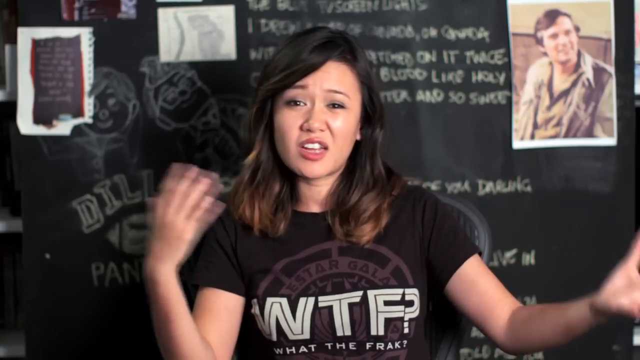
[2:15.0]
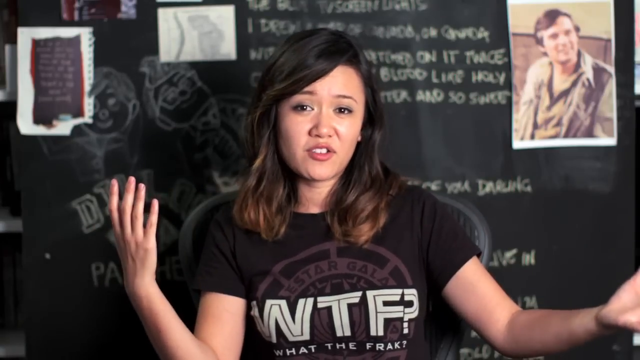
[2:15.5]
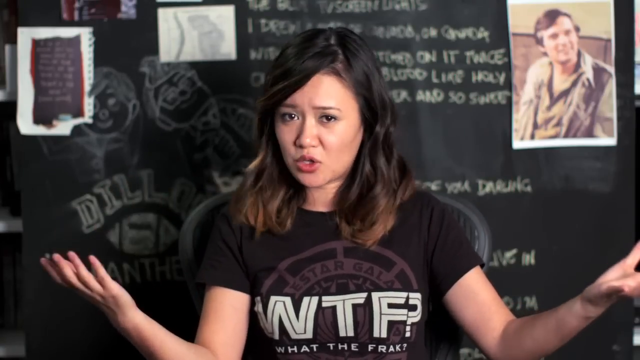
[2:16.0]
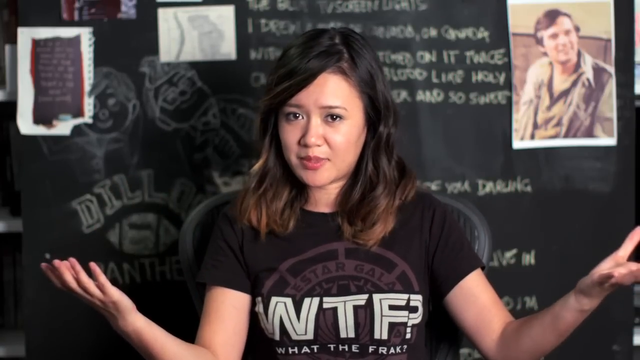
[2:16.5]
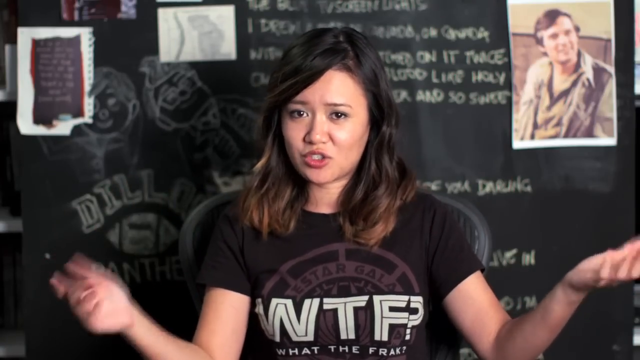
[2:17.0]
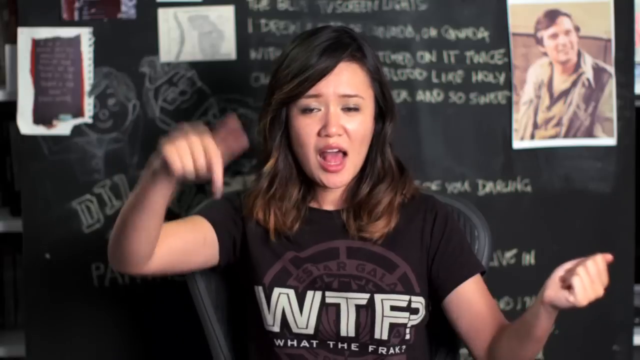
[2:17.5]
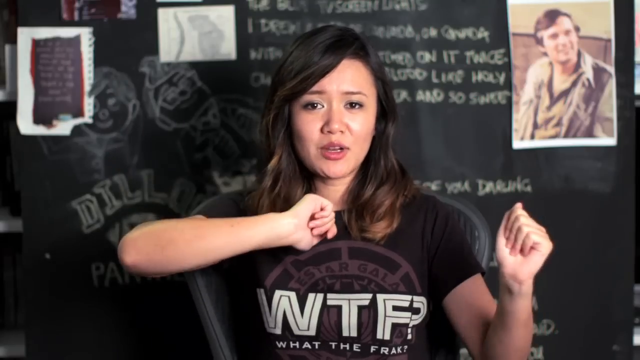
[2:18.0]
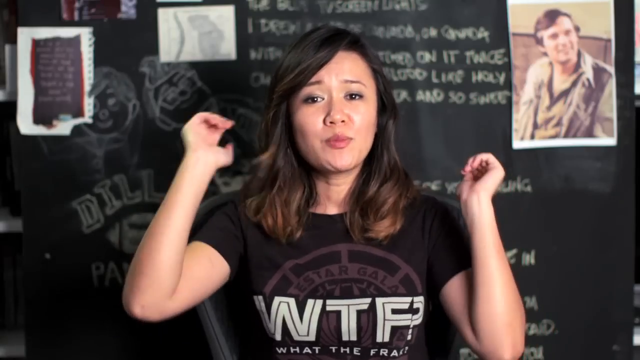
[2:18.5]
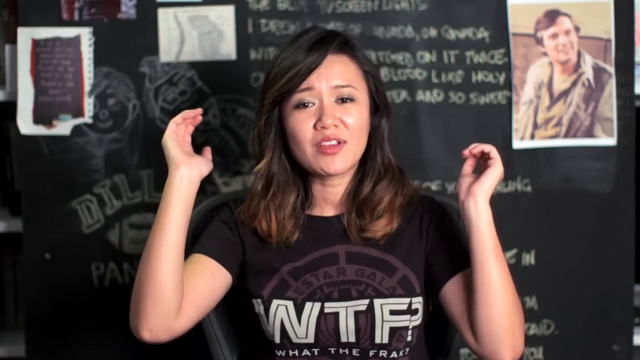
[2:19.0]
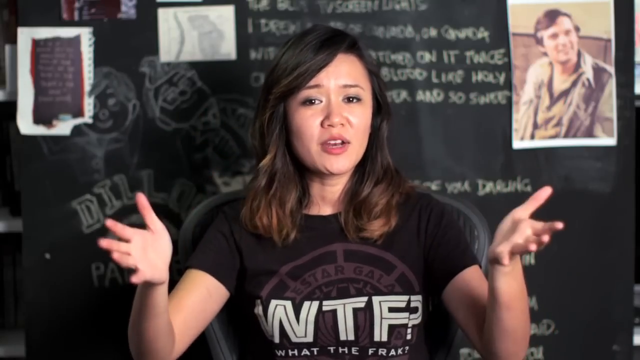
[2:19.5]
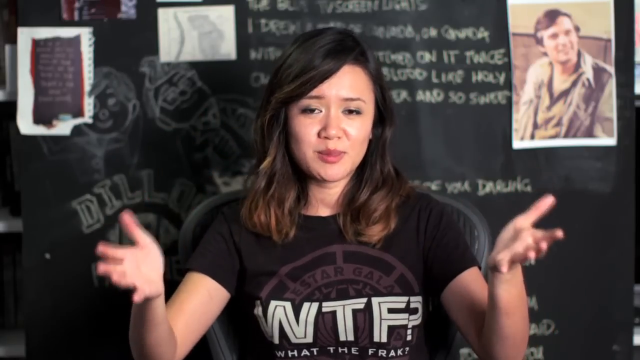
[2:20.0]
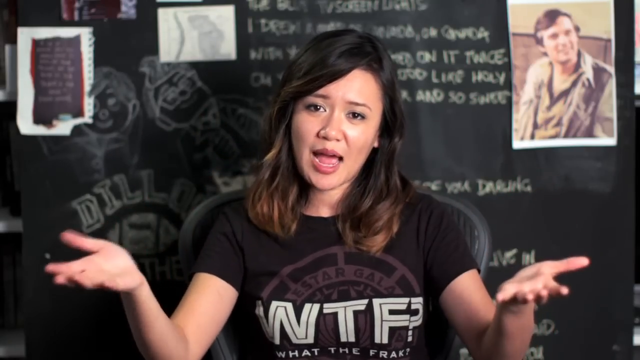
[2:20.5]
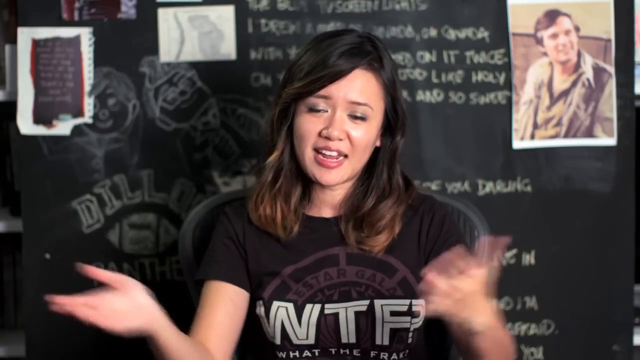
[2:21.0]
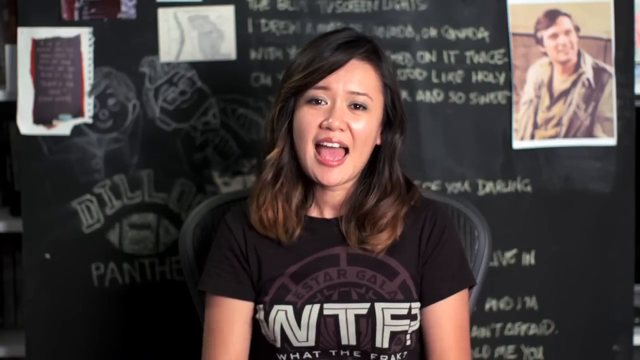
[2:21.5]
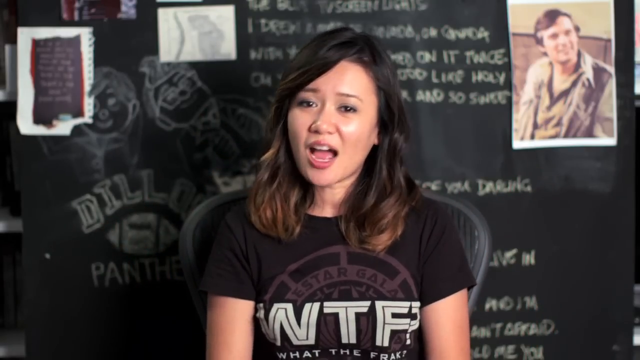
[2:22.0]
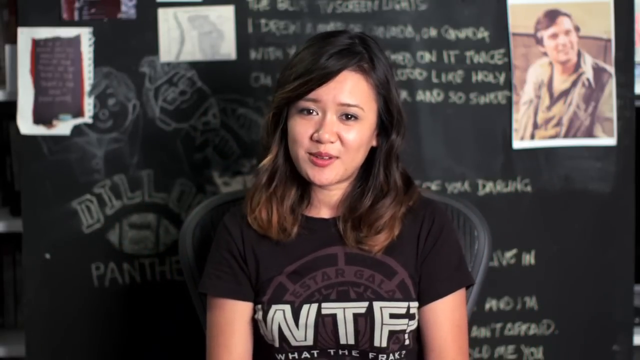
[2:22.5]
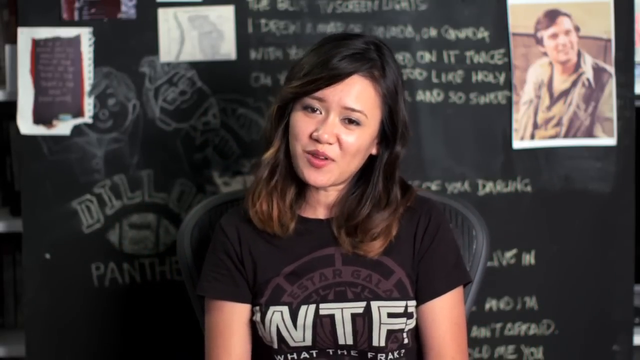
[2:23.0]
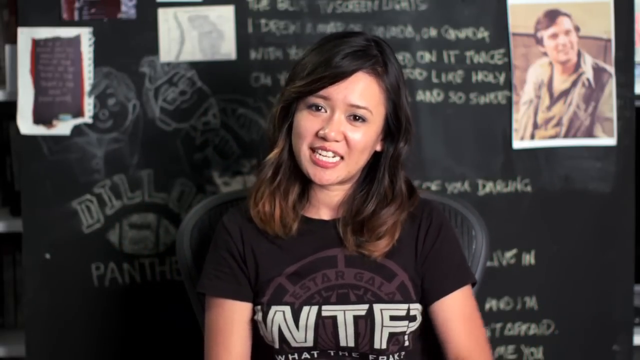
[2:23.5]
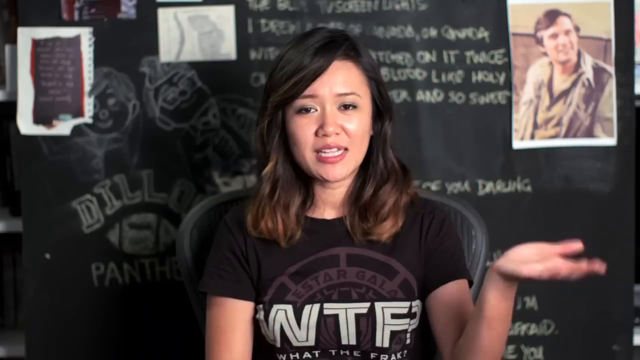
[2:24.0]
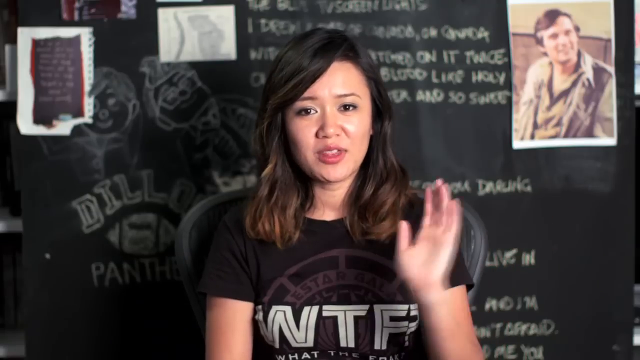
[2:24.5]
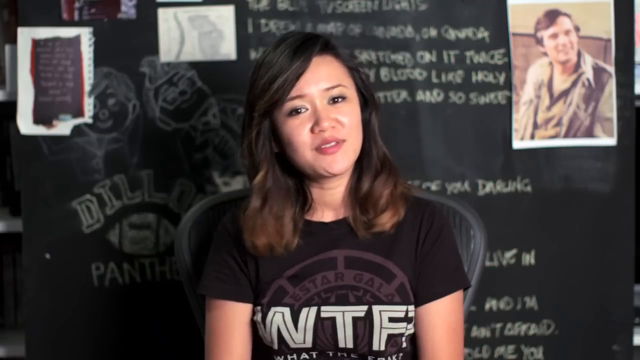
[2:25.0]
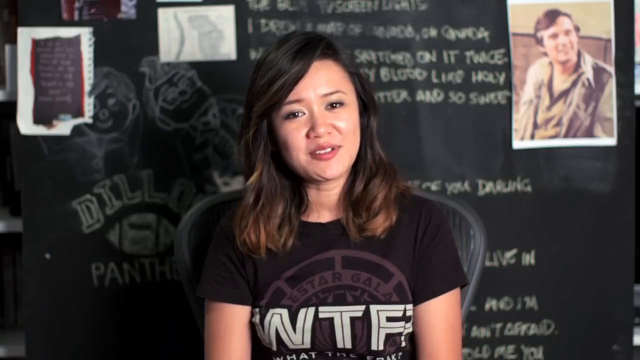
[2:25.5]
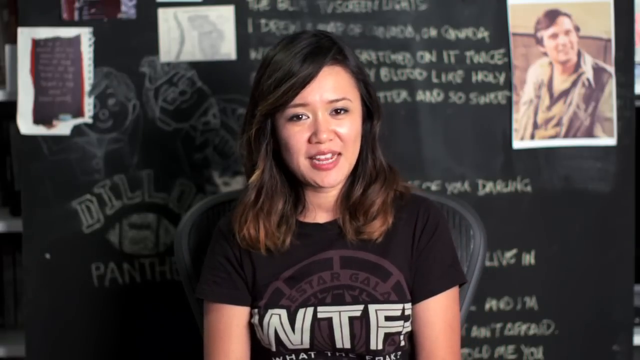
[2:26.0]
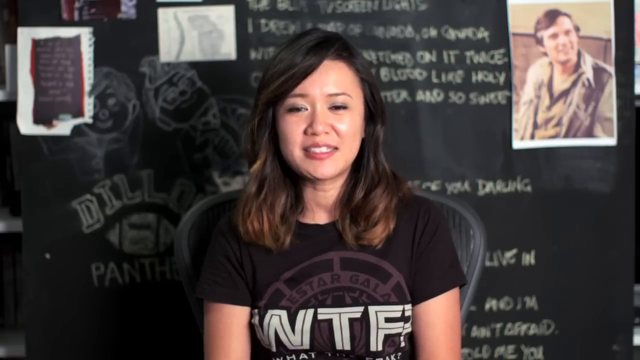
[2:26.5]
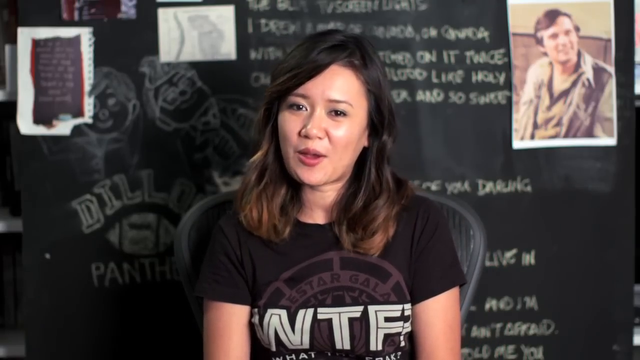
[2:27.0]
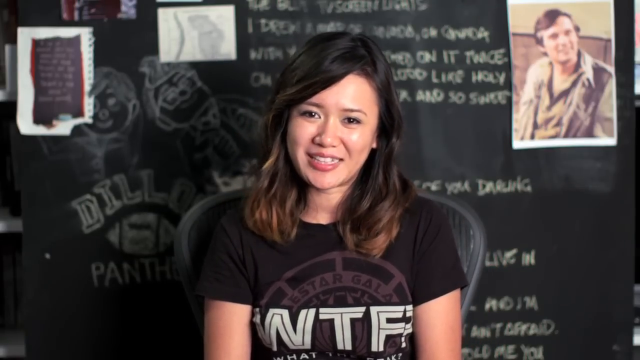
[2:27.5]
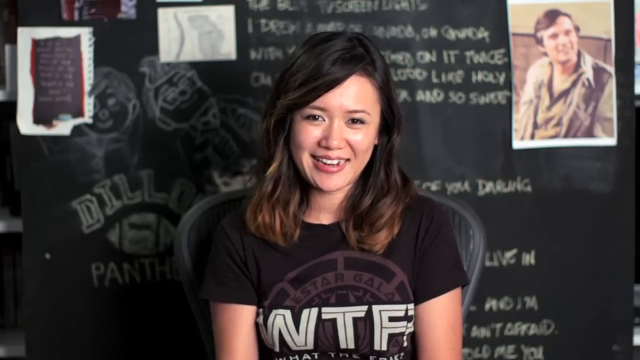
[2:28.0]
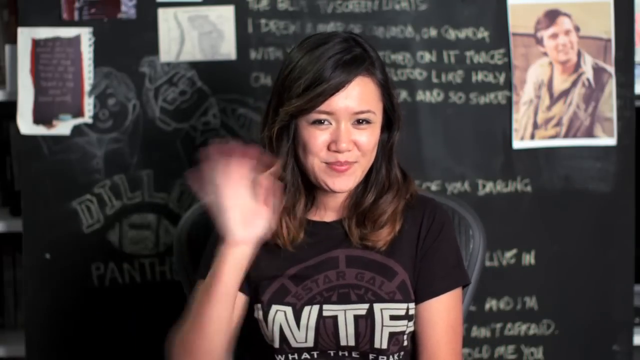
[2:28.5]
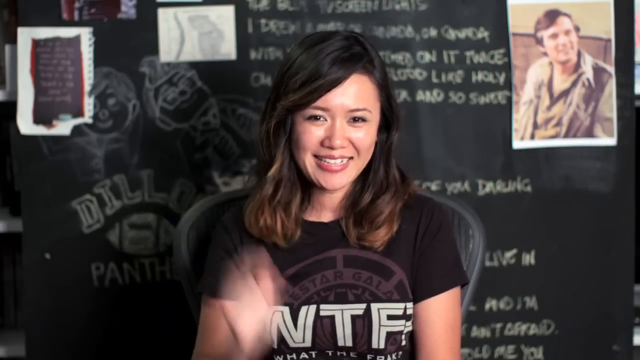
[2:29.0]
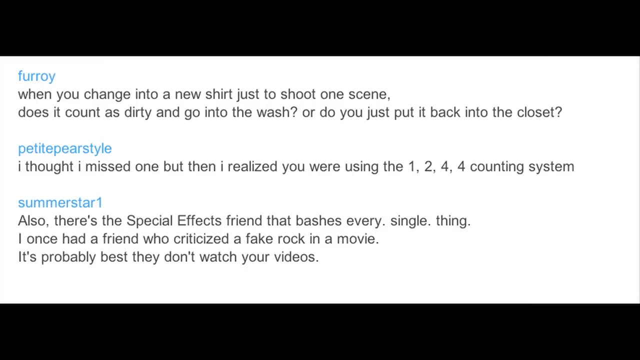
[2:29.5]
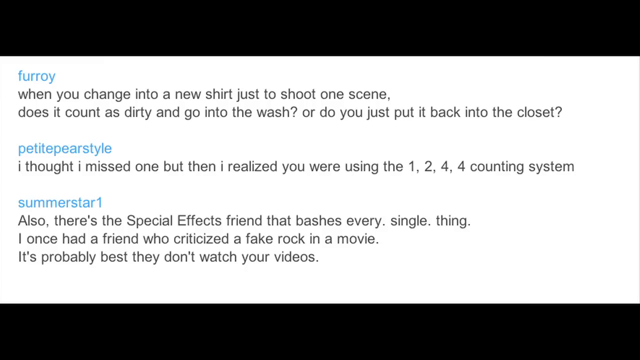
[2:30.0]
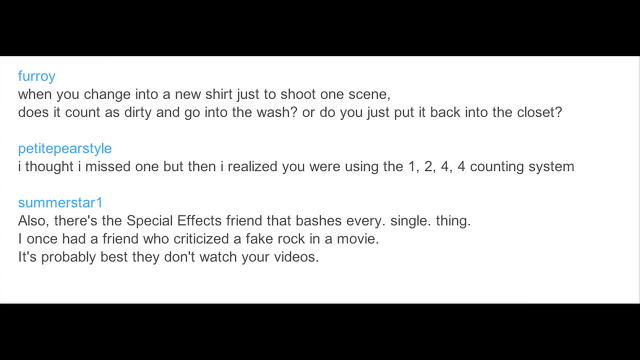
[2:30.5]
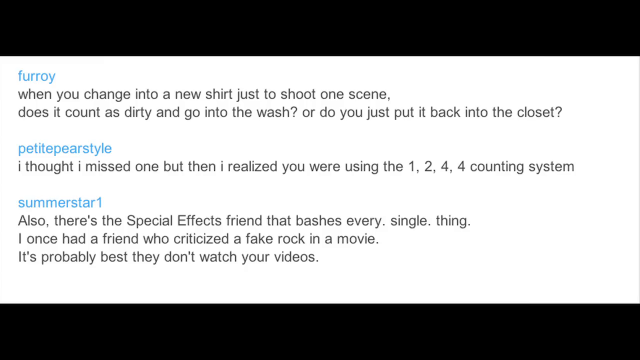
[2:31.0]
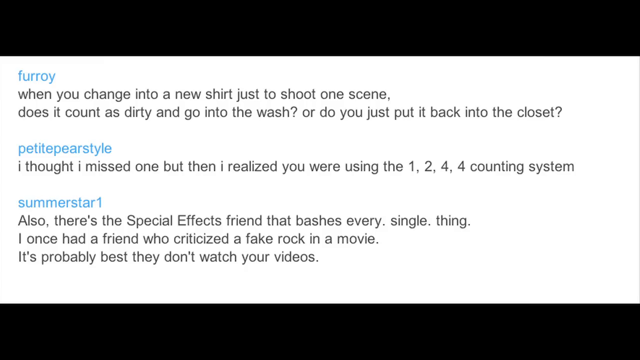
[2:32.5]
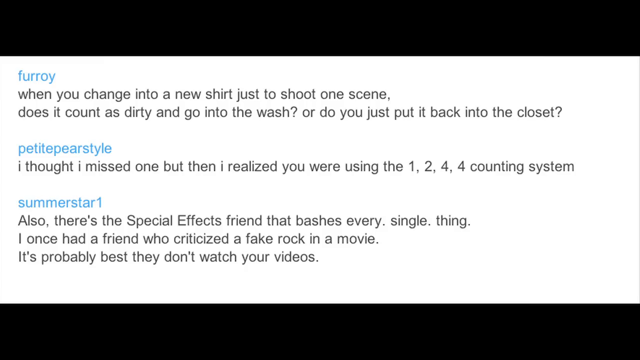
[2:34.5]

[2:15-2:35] The girl talks, moving her hands a lot, a little more open this time, sort of waving them around. Writing appears, blue at the top and then black, too small and too quick to read. Back to the girl talking and using her hands, with pictures behind her that look like animals and hoodies, maybe a word with what looks like a football underneath it, and text that says "Panthers". The writing returns: light blue at the top and black underneath, in three sections, each starting with light blue and then black. The wall behind the girl is black with writing on it. The shots alternate between the writing and the girl, who kind of points at herself, then holds her arms out and keeps talking.